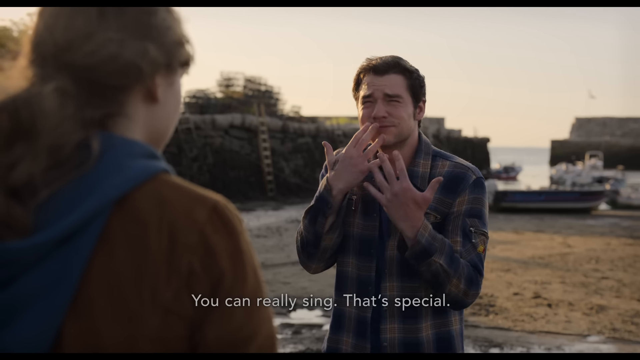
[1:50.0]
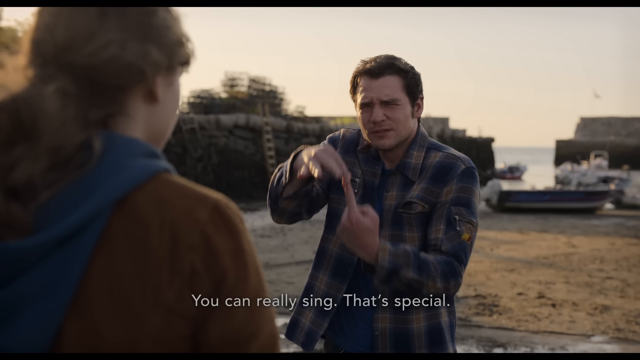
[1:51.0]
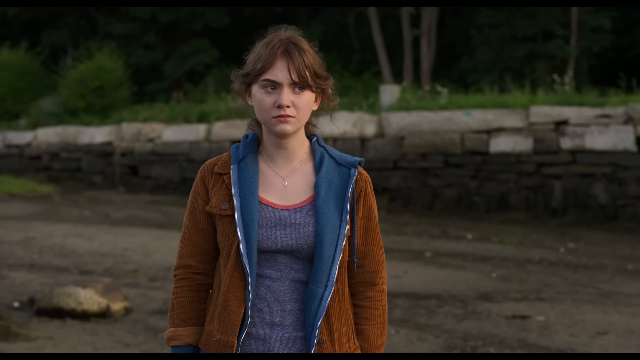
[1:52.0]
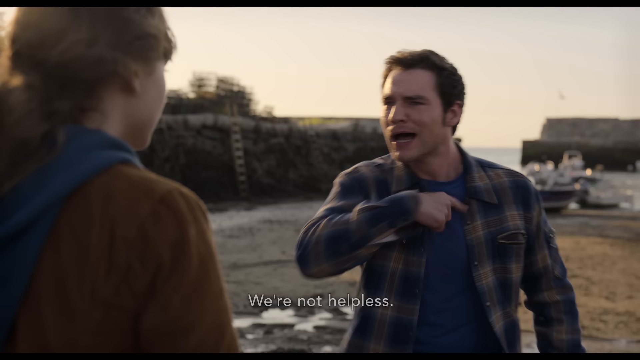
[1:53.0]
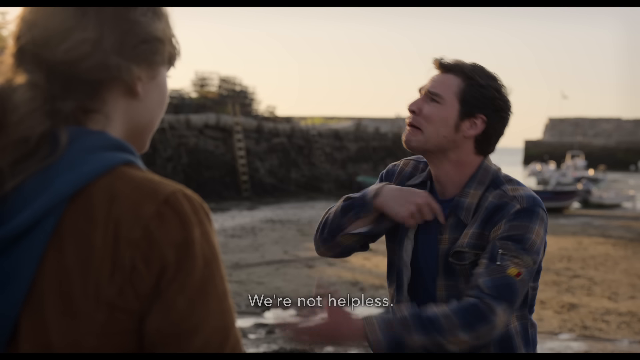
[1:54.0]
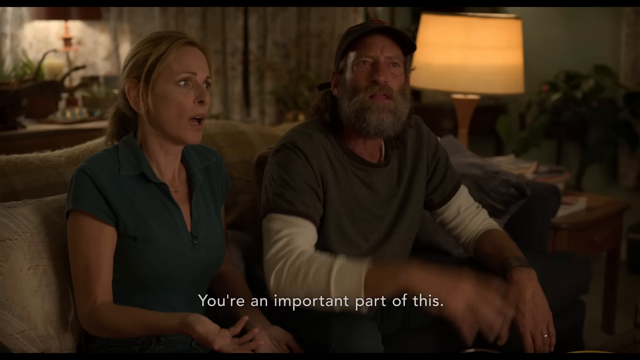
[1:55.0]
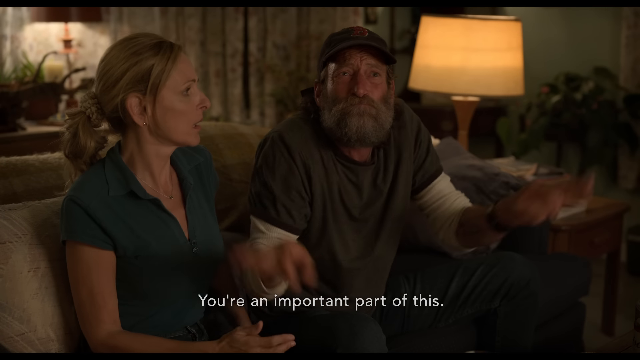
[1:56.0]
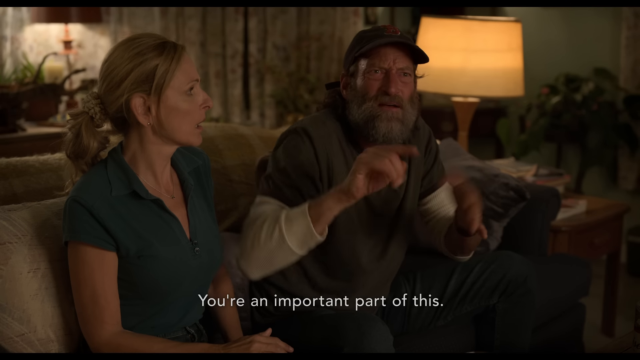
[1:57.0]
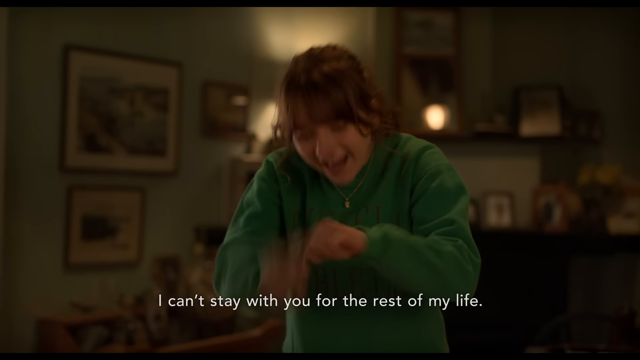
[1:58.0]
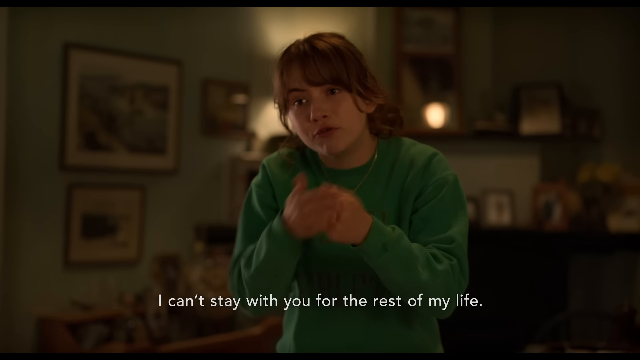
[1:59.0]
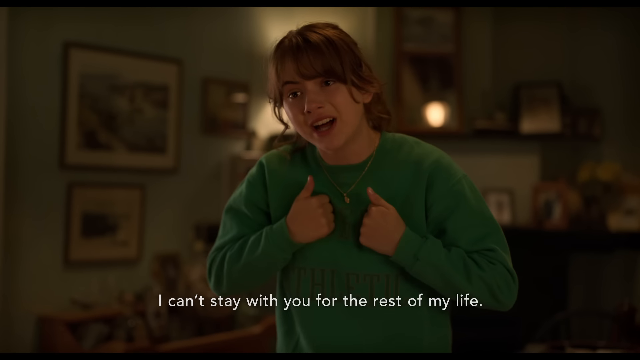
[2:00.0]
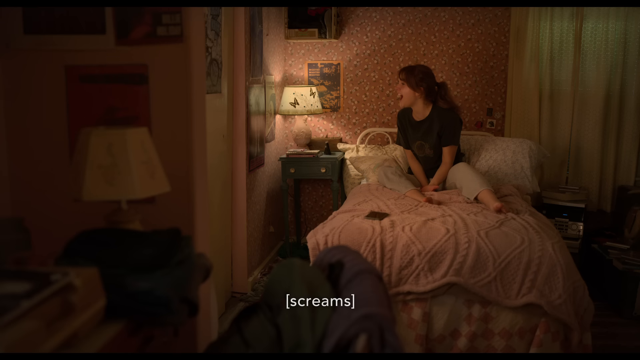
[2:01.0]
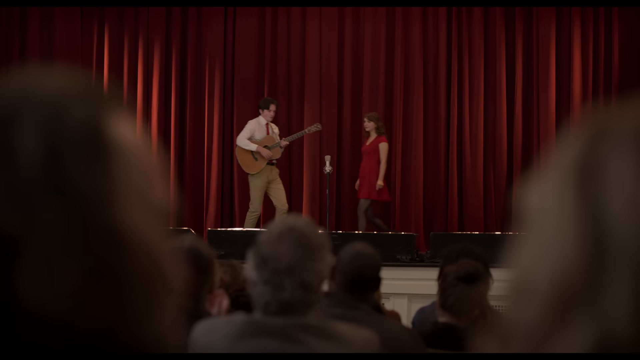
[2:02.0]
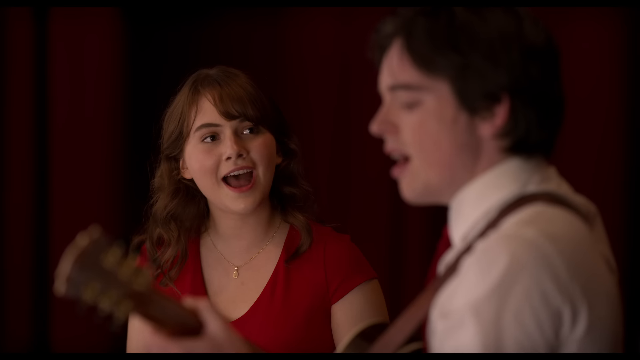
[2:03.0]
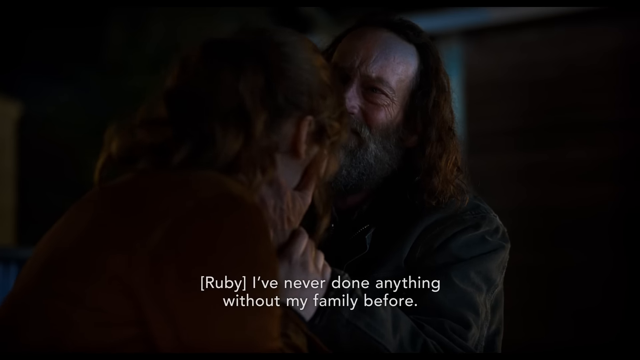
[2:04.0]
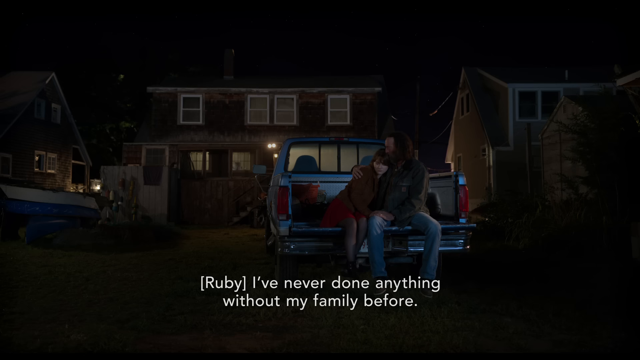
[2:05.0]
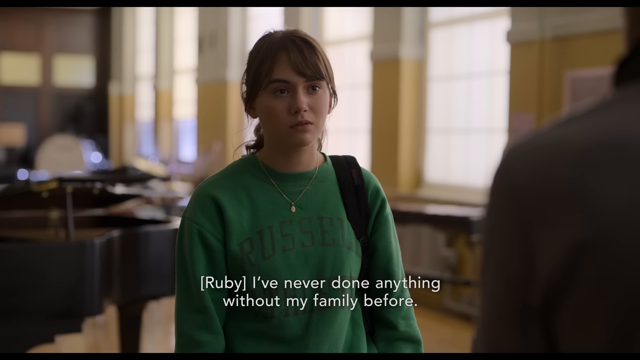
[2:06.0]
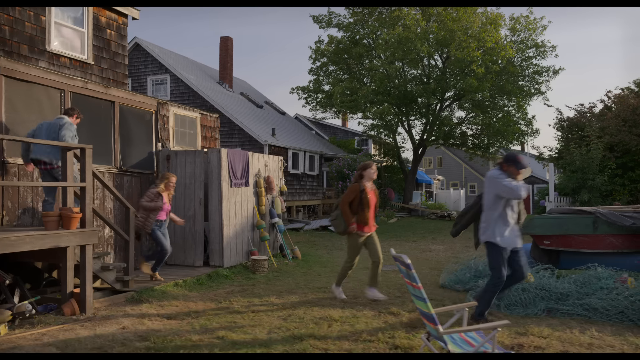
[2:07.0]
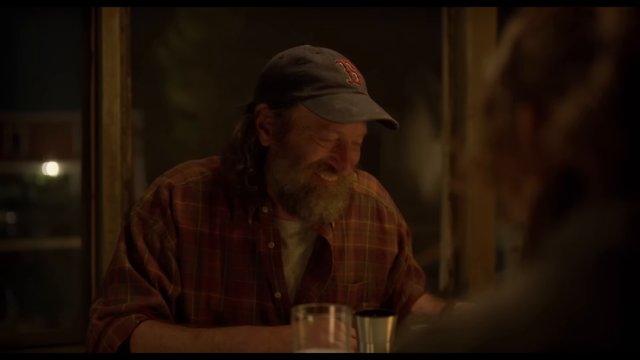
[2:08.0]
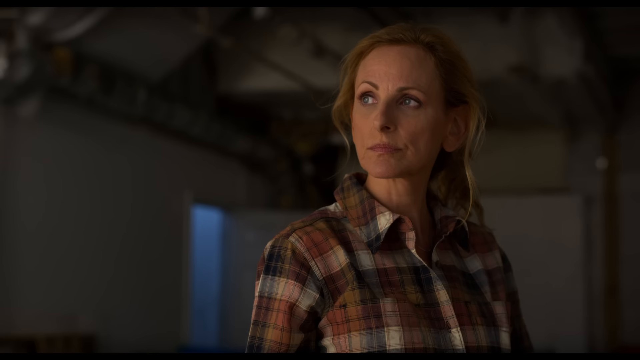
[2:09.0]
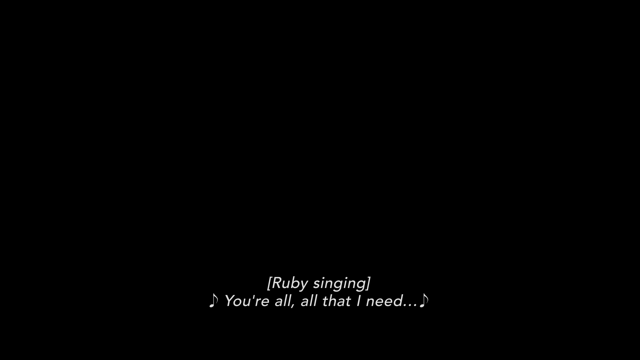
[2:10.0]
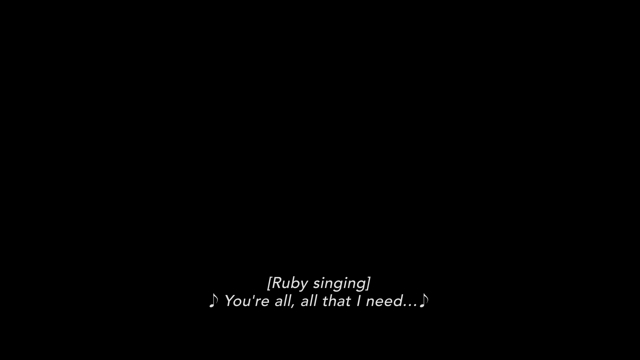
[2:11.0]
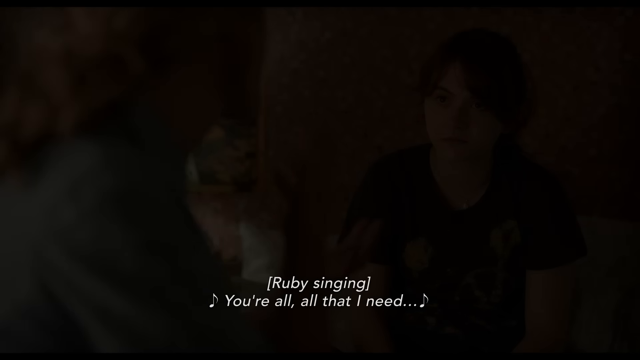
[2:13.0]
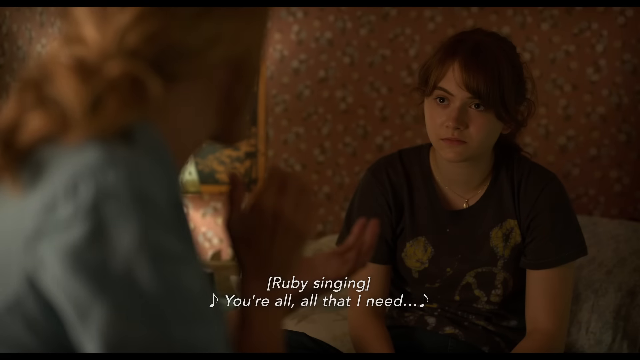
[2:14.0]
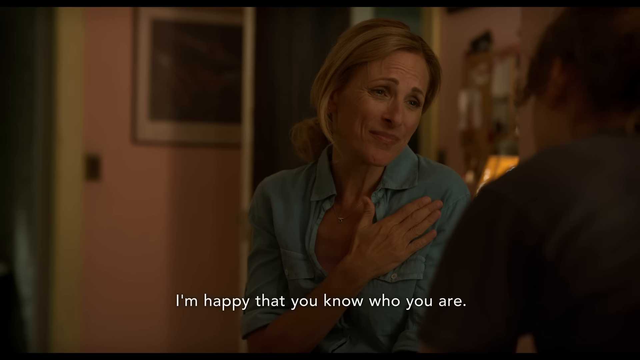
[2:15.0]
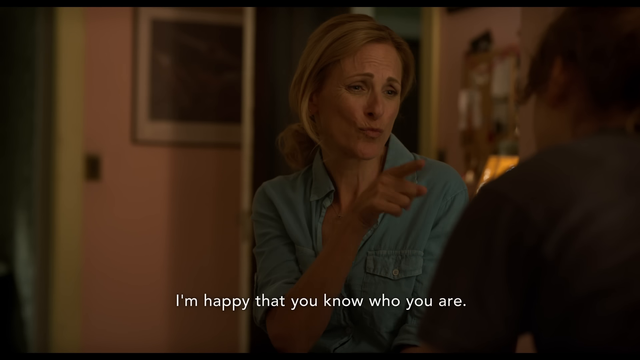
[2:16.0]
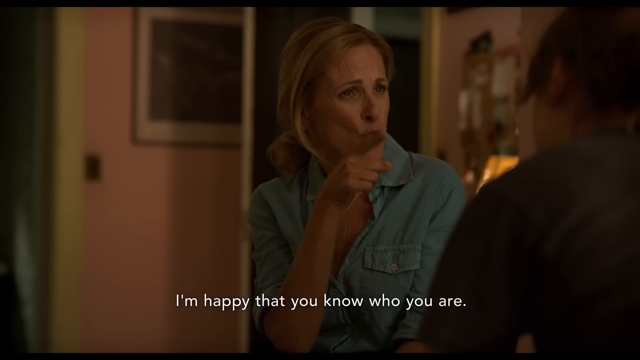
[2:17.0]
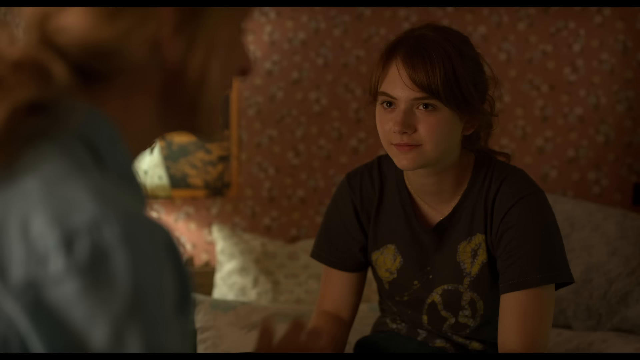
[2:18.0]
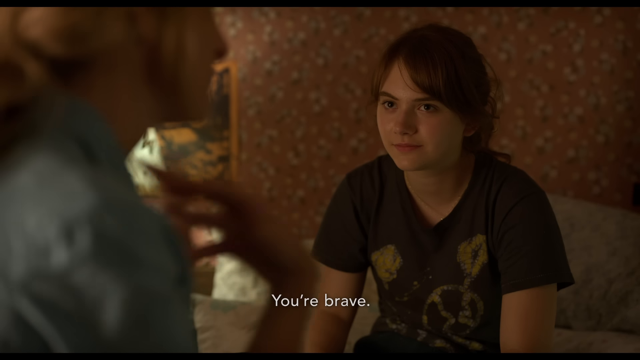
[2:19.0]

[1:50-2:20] A teenage male in blue and gray plaid signs at the girl standing across from him; he says "you can't really sing that expression." Smiling, he points his two index fingers together and shakes his two hands, appearing to gesture wildly, while the girl, wearing a brown suede shirt, looks a bit shocked. The scene switches to the parents sitting on the counter; the dad wears a long-sleeved white shirt and a gray t-shirt. Looking a little concerned, they use sign language. The girl in the green sweater smiles and says "I can't stay with you for the rest of my life." The teenage girl then stands in her bedroom with a bedspread, pink walls, and signs and posters on the wall. It switches again to her in a red dress on a stage with red curtains behind her.